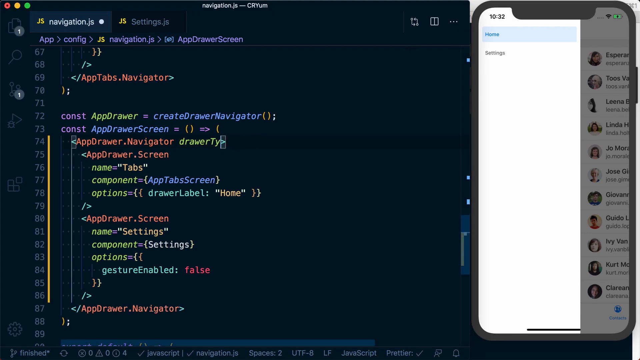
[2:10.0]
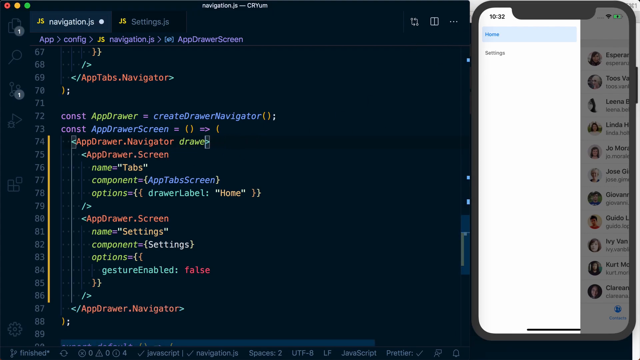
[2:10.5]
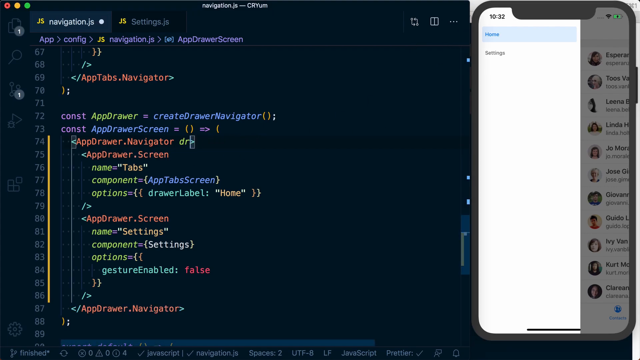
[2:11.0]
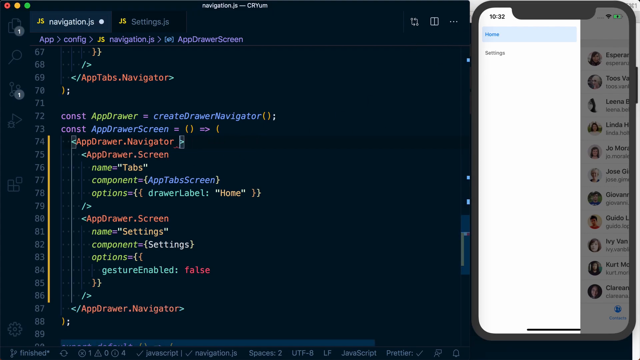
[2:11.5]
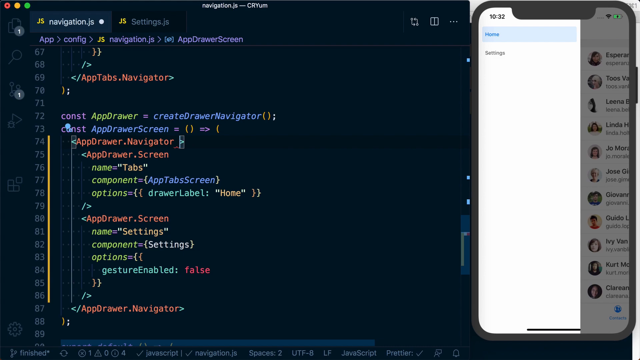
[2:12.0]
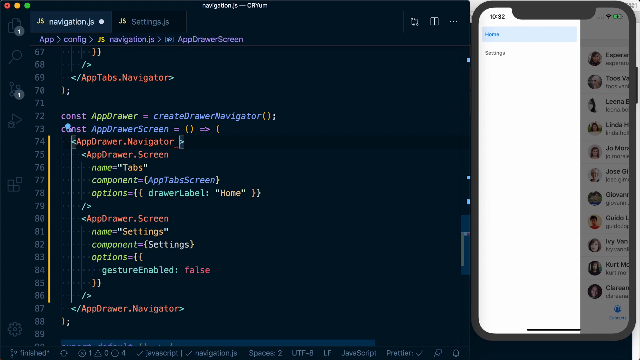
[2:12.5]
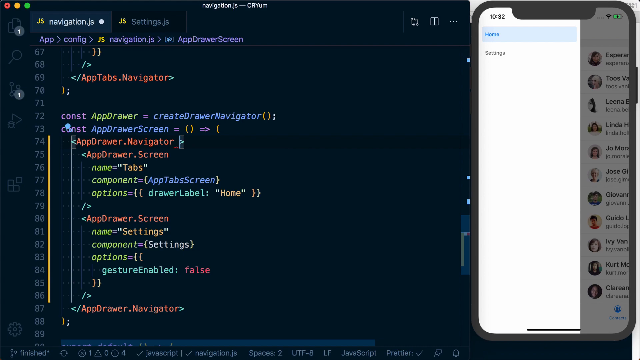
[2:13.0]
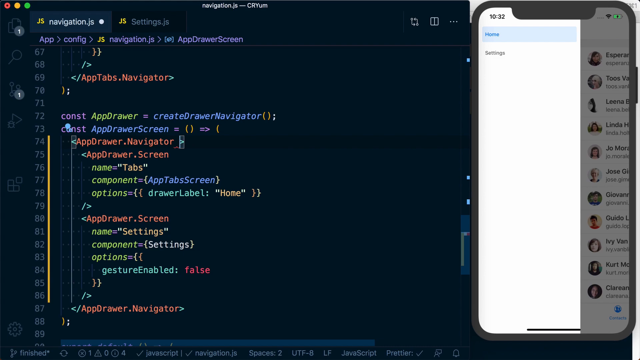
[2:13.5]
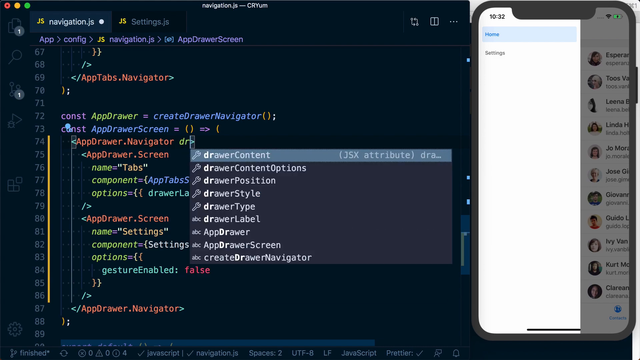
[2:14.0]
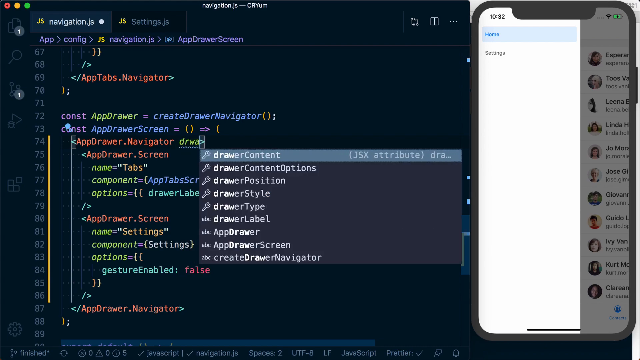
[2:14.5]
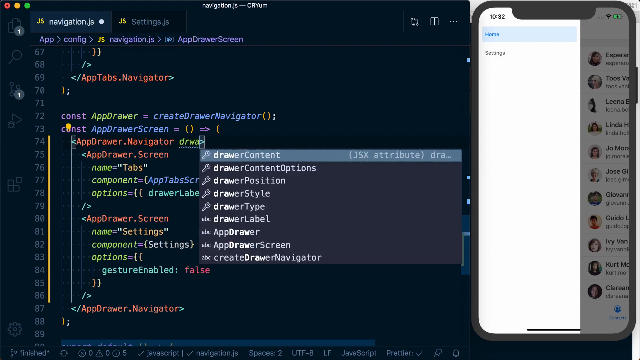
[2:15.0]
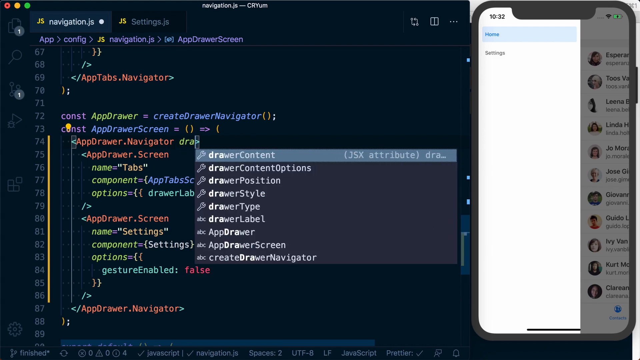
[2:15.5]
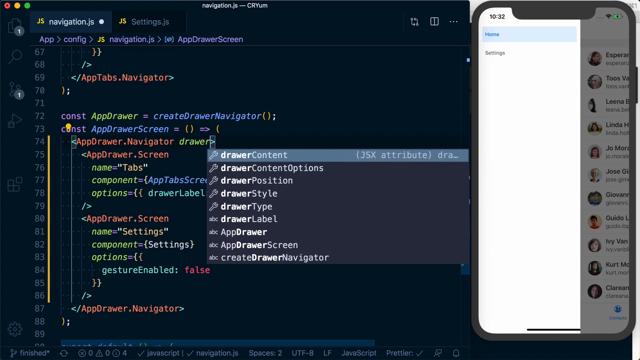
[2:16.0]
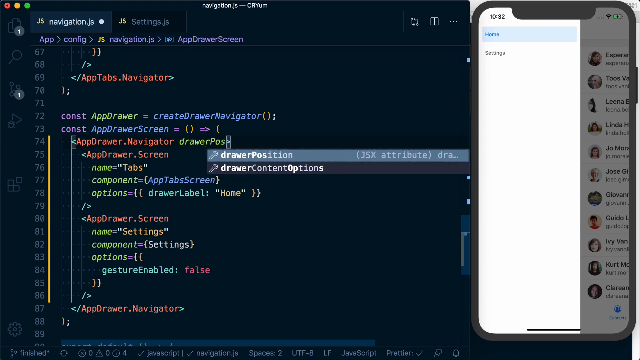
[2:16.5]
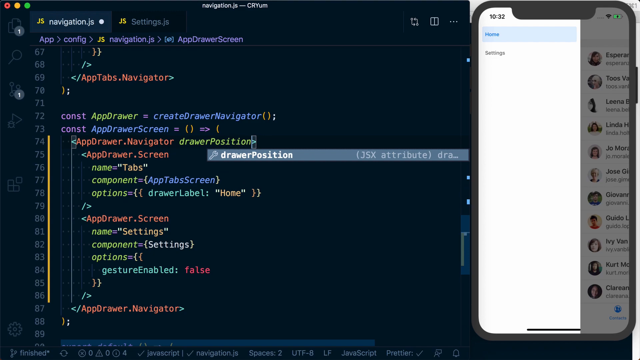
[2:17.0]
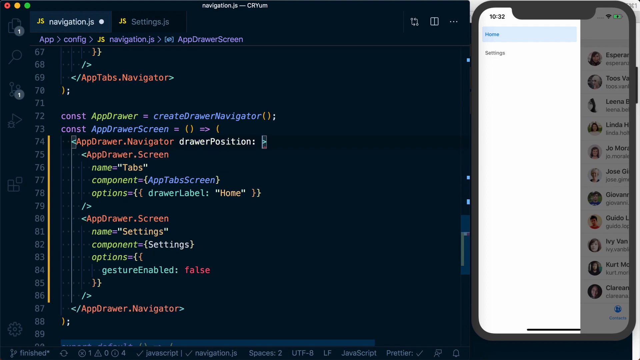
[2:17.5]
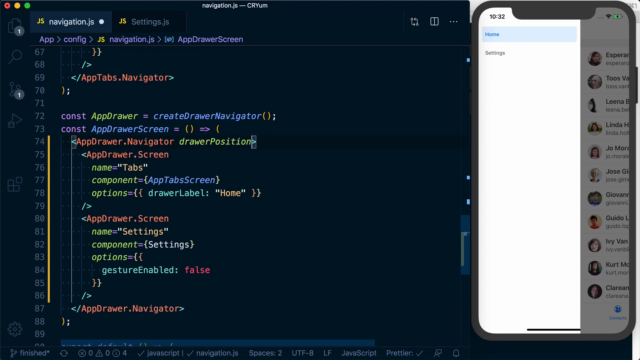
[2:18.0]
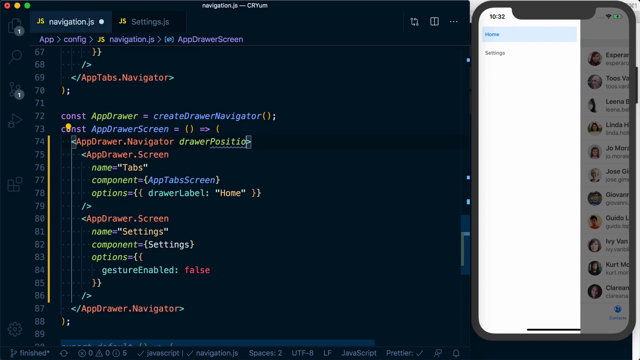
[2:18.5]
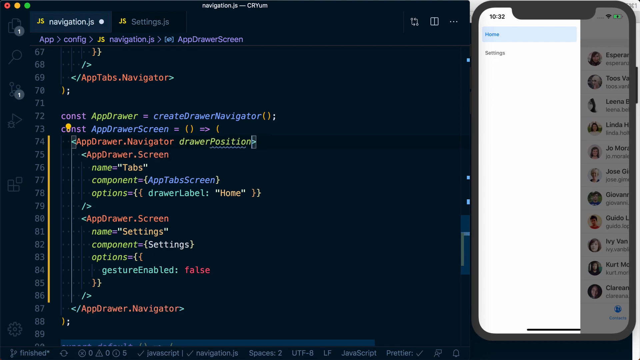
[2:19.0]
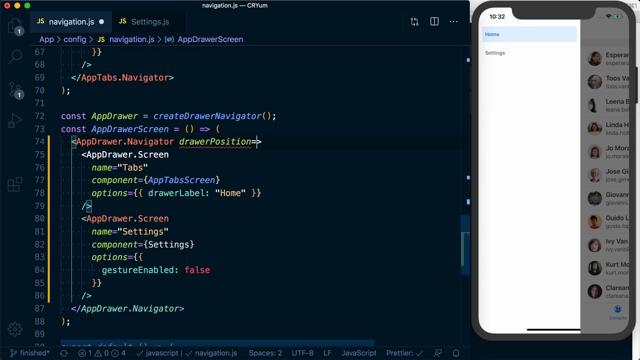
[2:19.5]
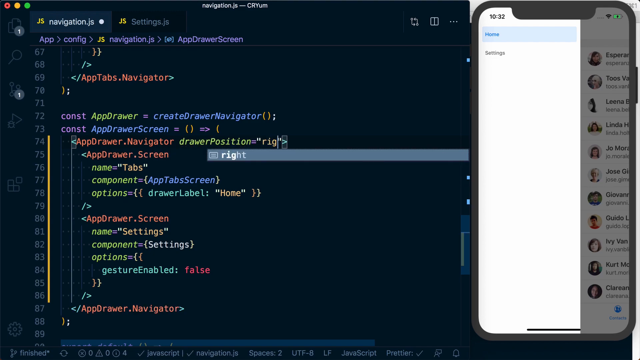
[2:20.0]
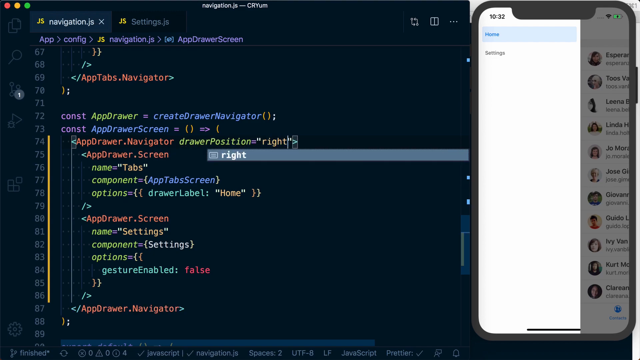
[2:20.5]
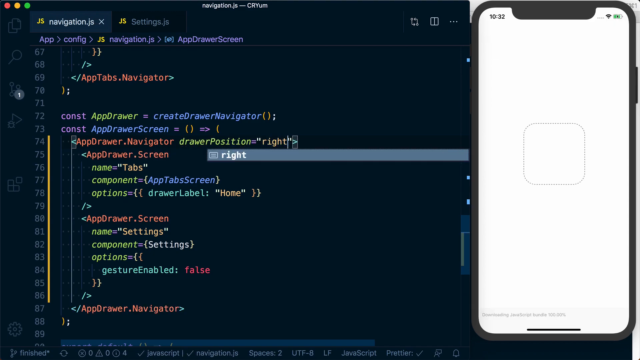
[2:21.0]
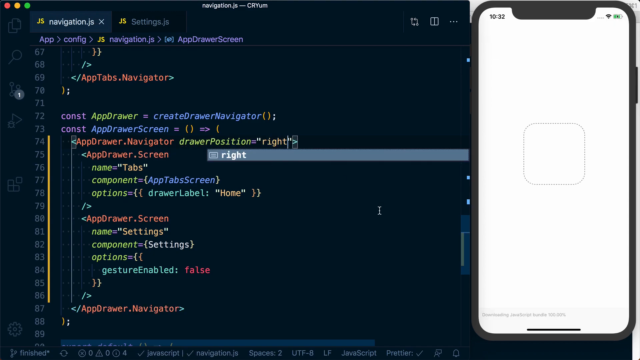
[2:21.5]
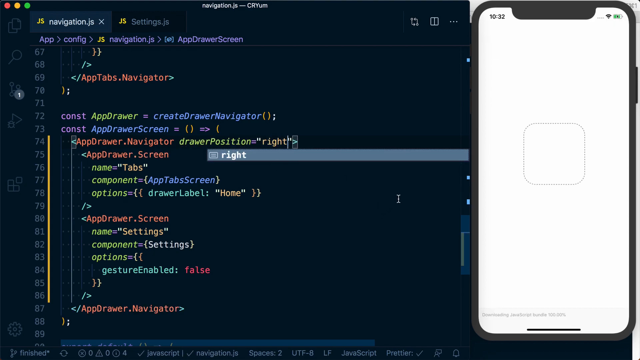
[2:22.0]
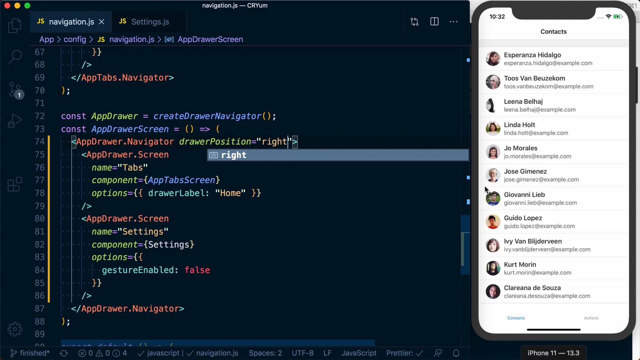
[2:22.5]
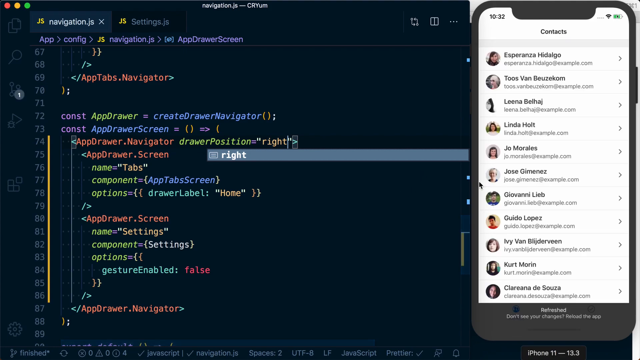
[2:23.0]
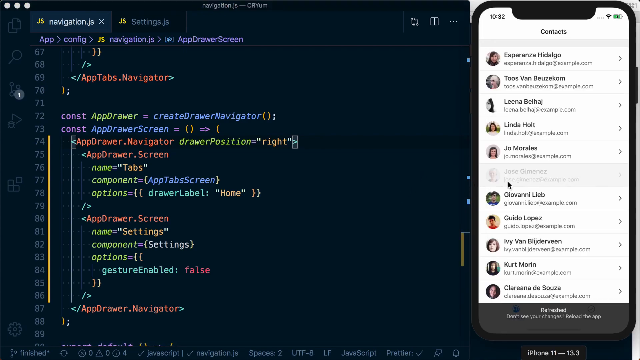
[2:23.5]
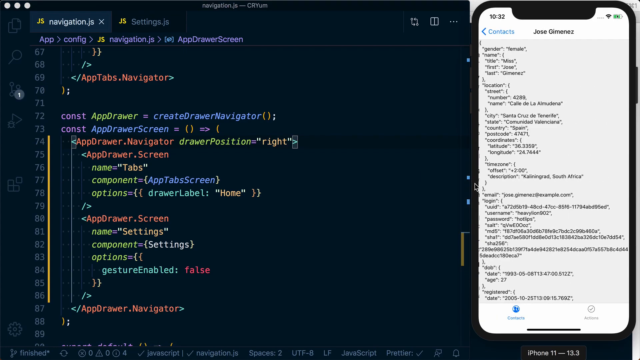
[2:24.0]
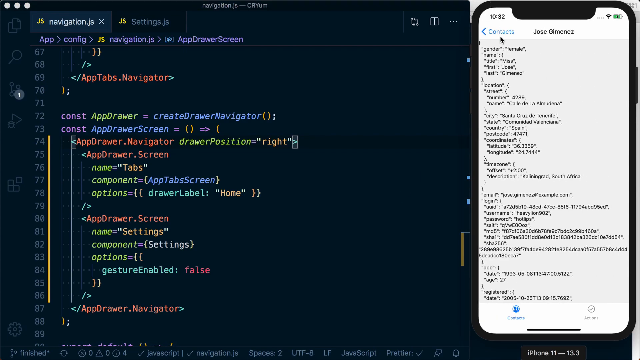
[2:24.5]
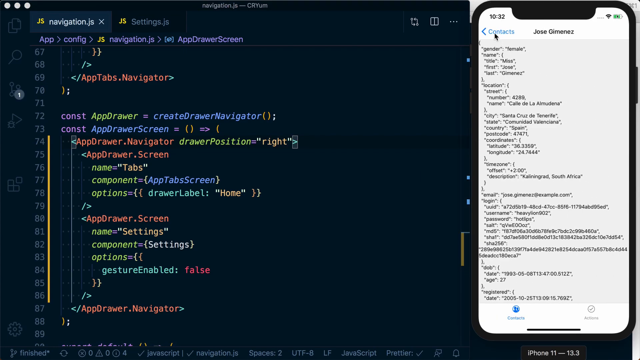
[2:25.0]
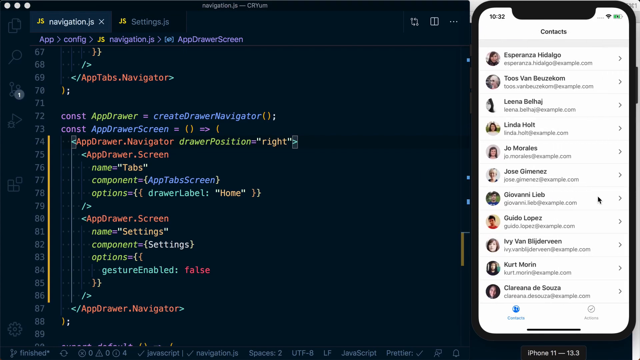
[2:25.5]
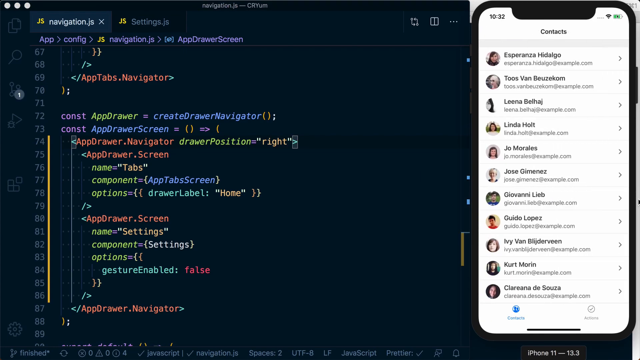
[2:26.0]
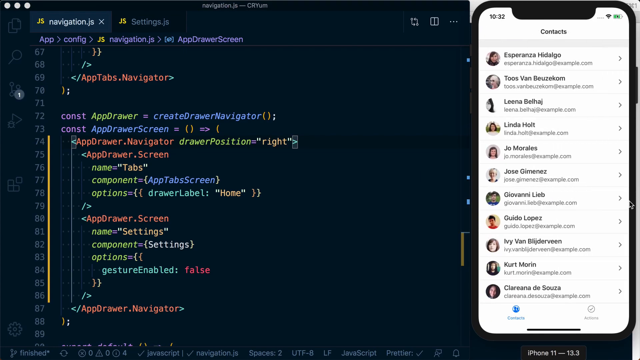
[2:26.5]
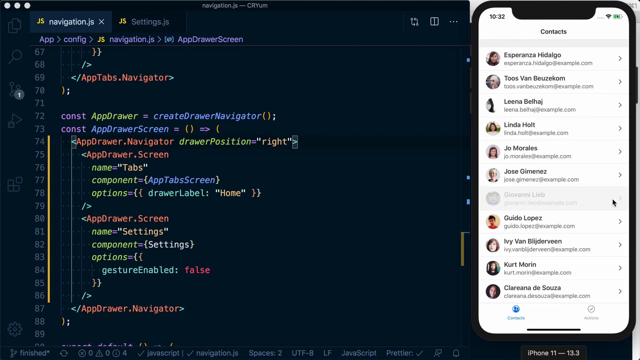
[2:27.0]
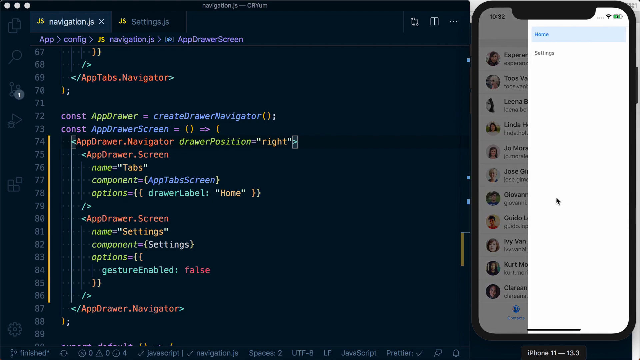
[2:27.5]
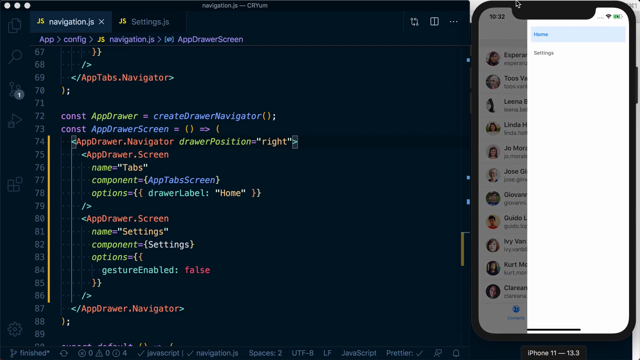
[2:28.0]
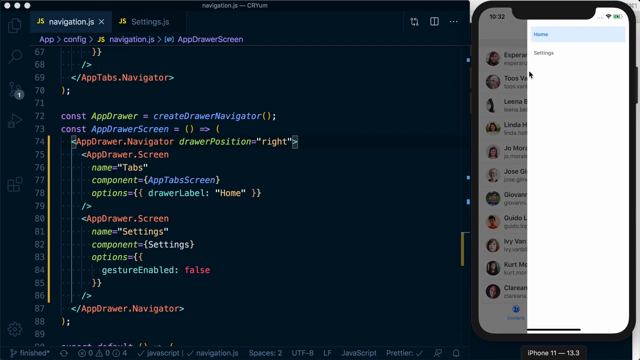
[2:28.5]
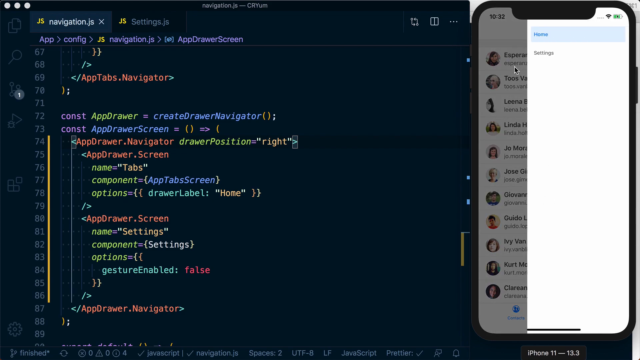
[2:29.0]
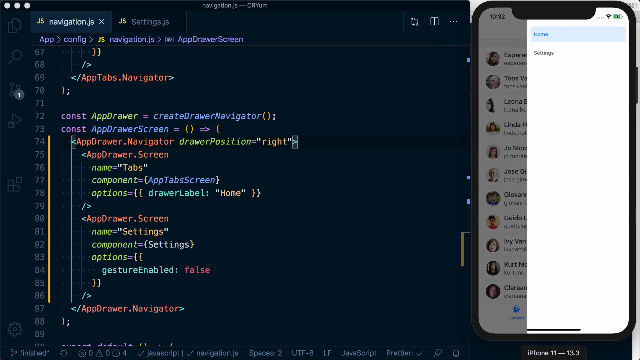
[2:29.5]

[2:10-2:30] Somebody demonstrates coding on their computer, on a black screen titled "navigationjs-cryum" at the top. There are two tabs: "jsnavigation.js", which is open, and "js settings", which is not selected. In the top left-hand corner is a stoplight of red, yellow and green. On the right-hand side is a phone, or a superimposed phone, with a home tab and a settings tab, currently on contacts; the person occasionally moves this over and it goes back. The person deletes part of the code, types "drawer position", and when options pop up, selects "right". They scroll over to the phone and click on contacts, and what looks almost like code comes up for the contacts on the phone. Then home and settings come back up, but now on the right side instead of the left side.